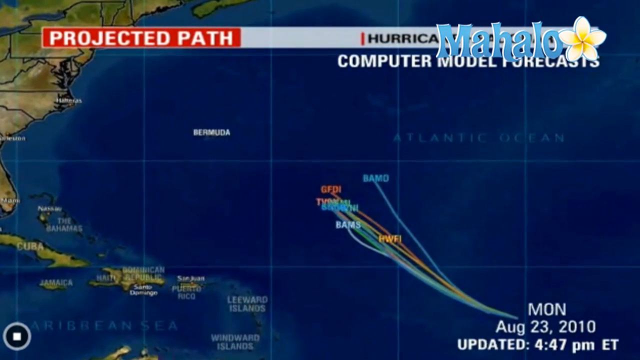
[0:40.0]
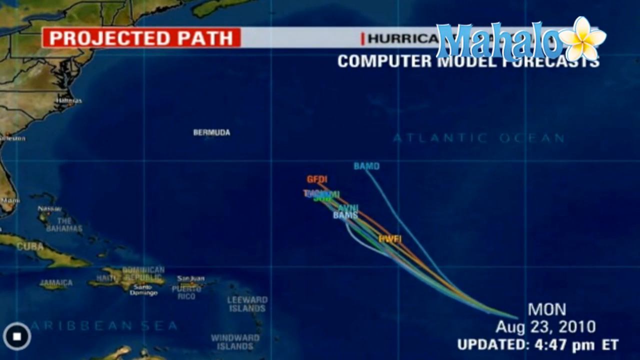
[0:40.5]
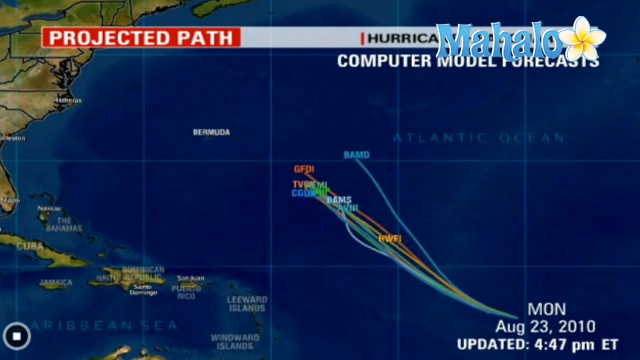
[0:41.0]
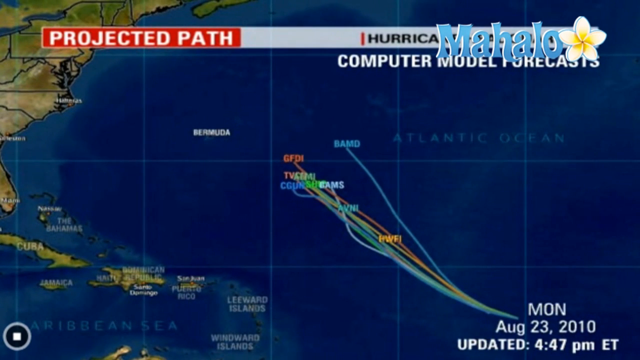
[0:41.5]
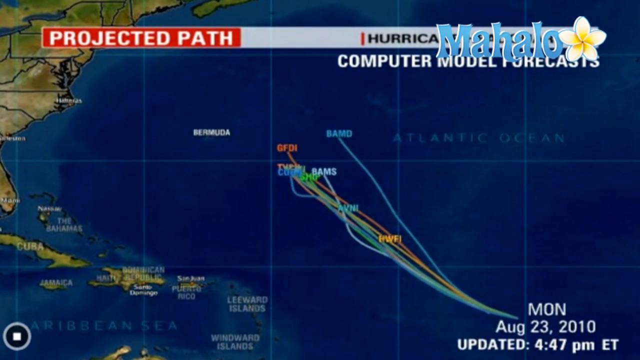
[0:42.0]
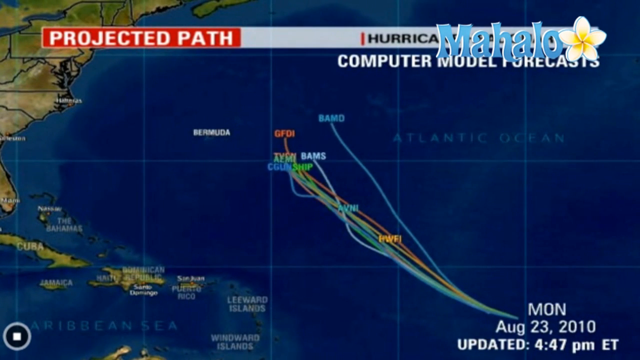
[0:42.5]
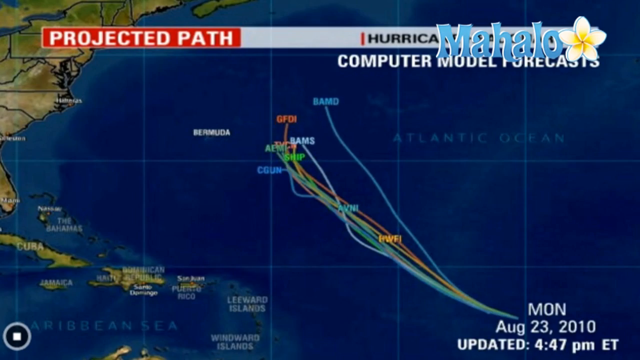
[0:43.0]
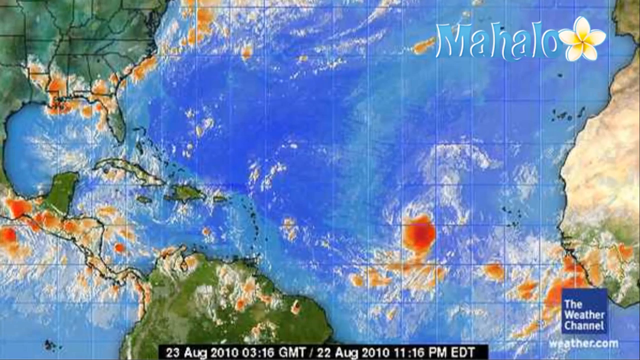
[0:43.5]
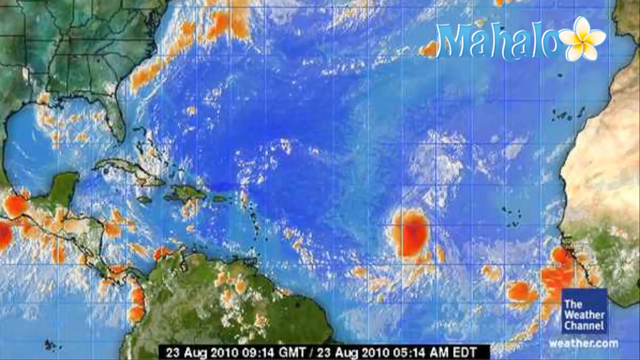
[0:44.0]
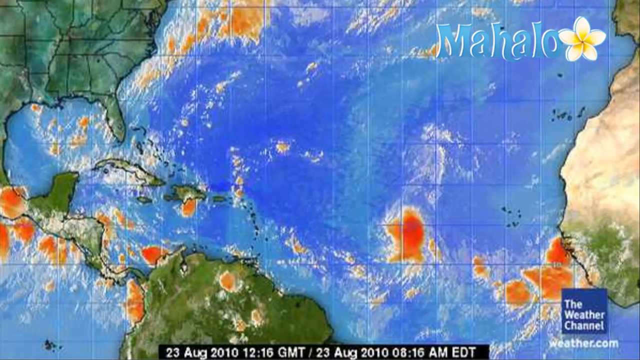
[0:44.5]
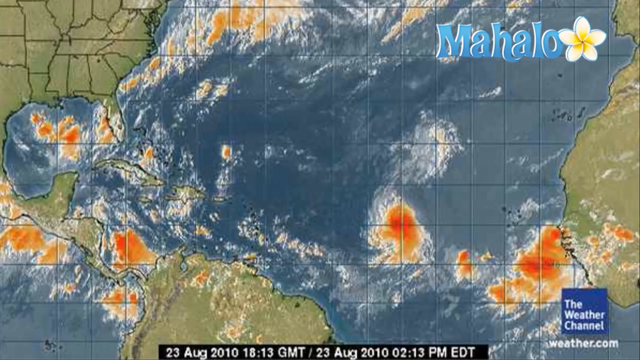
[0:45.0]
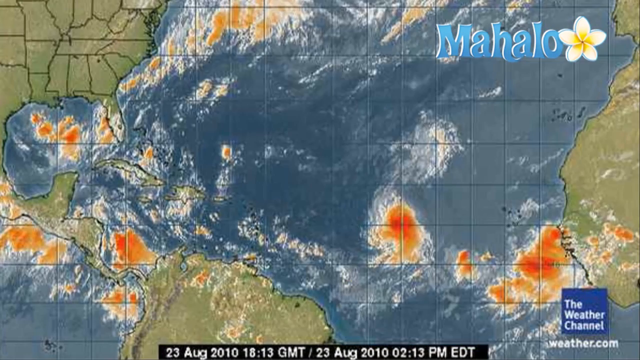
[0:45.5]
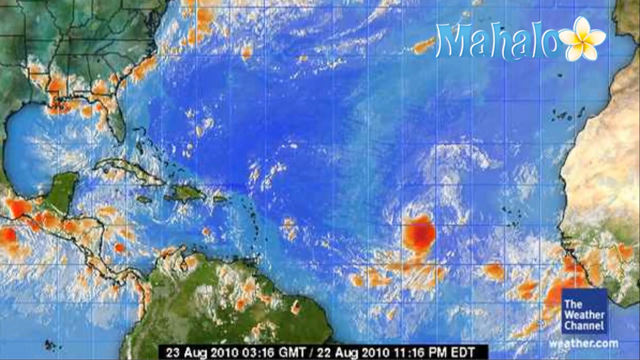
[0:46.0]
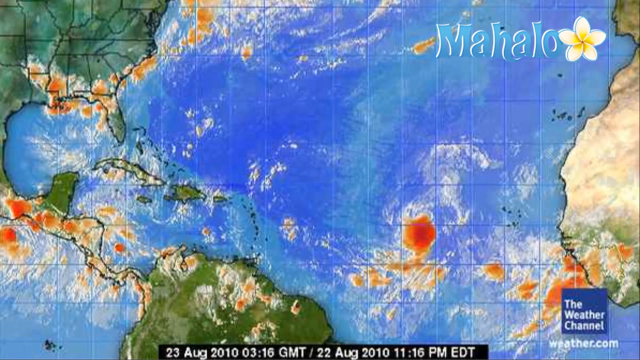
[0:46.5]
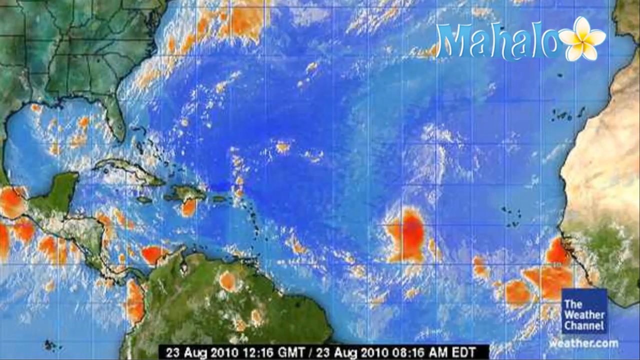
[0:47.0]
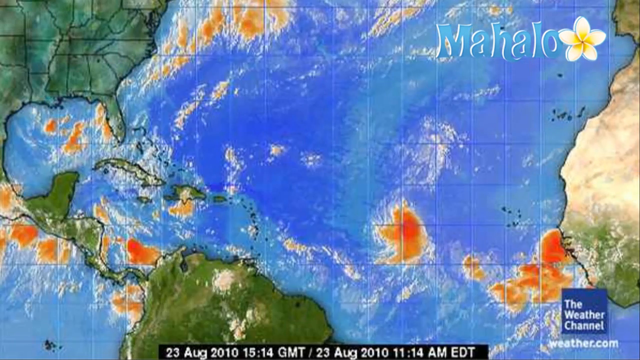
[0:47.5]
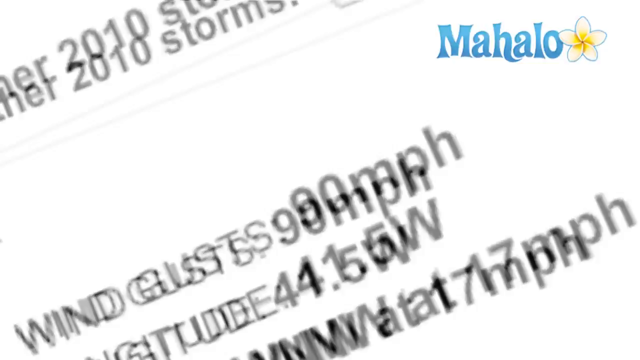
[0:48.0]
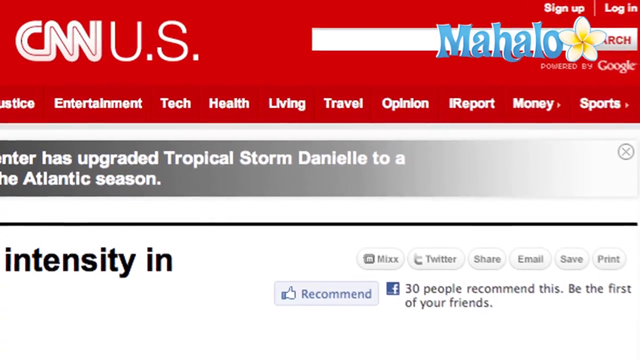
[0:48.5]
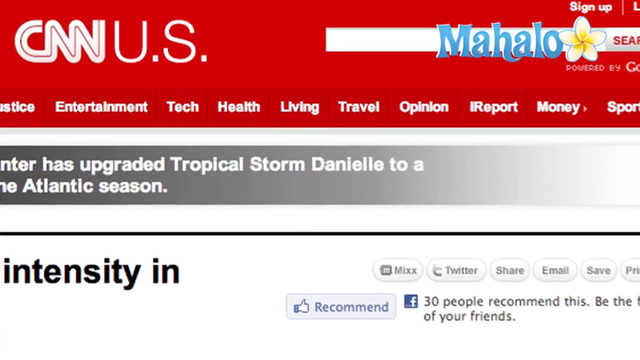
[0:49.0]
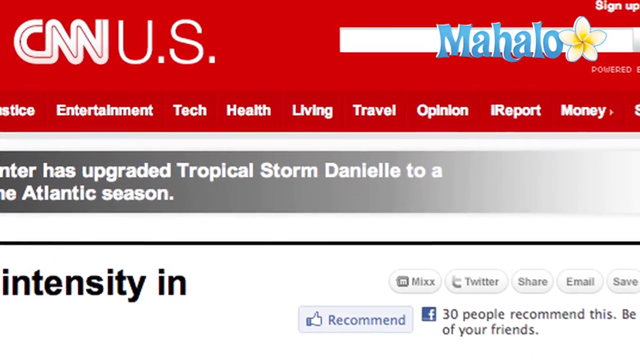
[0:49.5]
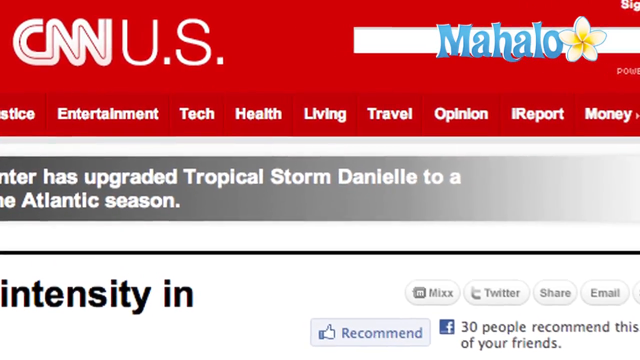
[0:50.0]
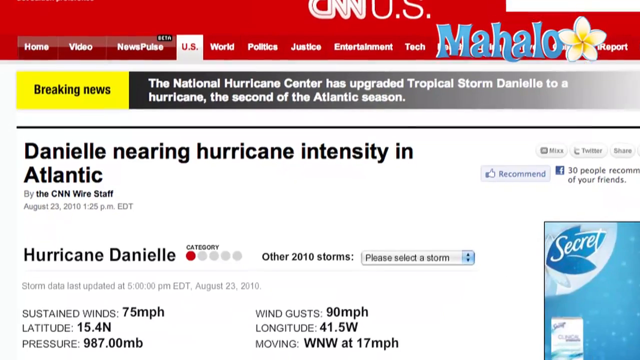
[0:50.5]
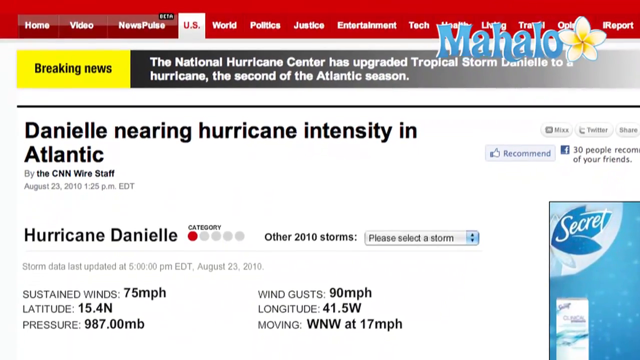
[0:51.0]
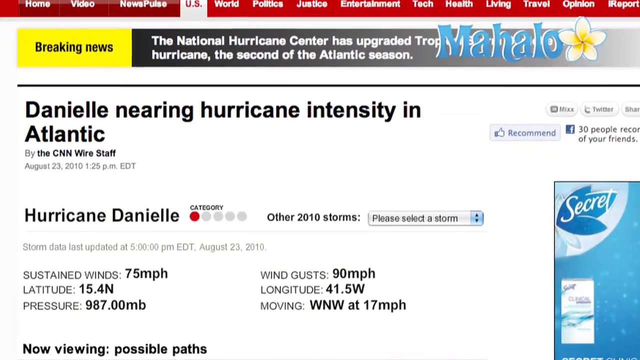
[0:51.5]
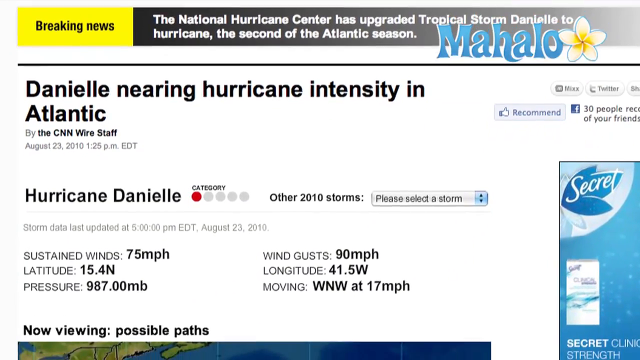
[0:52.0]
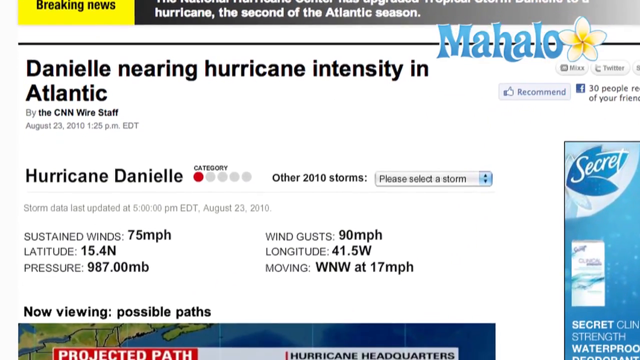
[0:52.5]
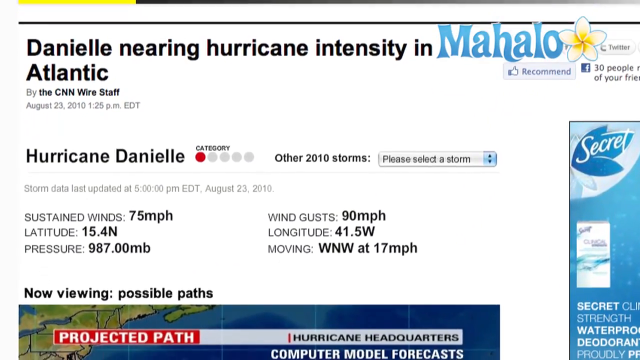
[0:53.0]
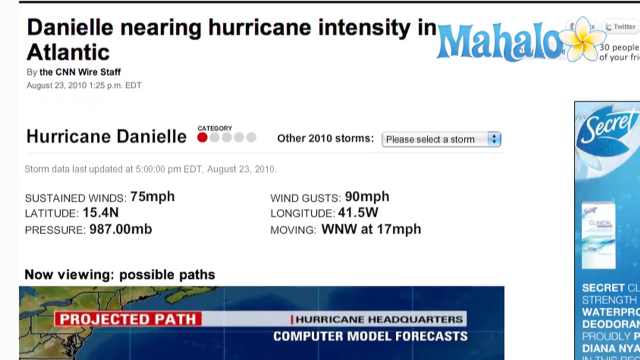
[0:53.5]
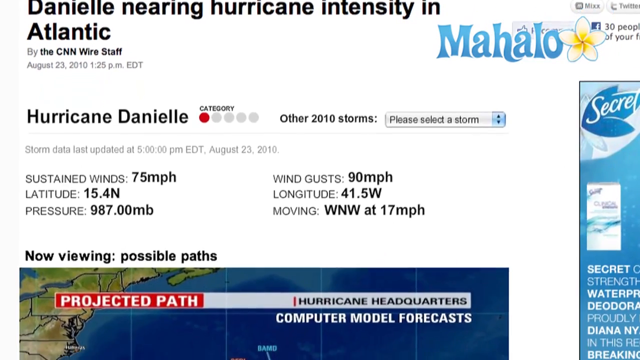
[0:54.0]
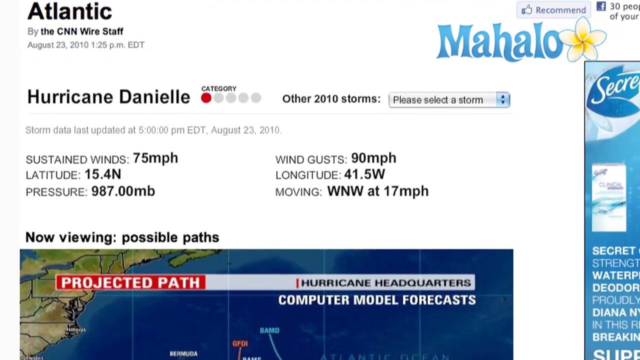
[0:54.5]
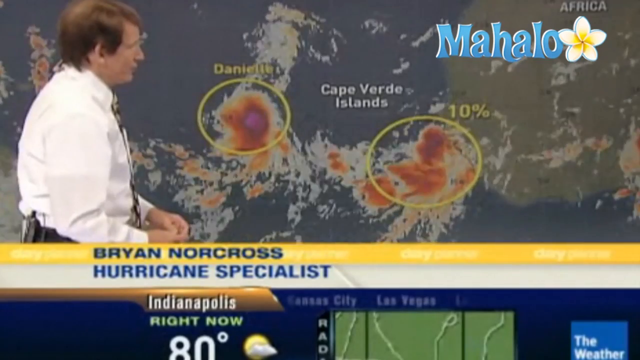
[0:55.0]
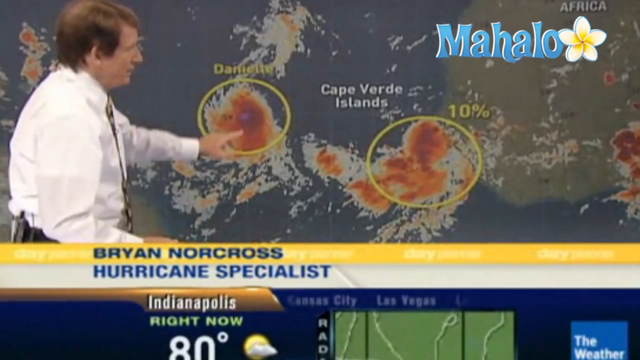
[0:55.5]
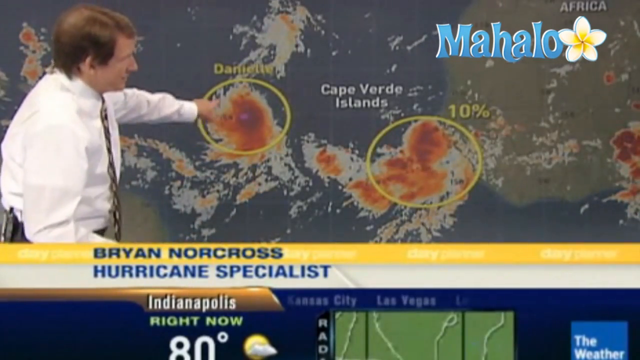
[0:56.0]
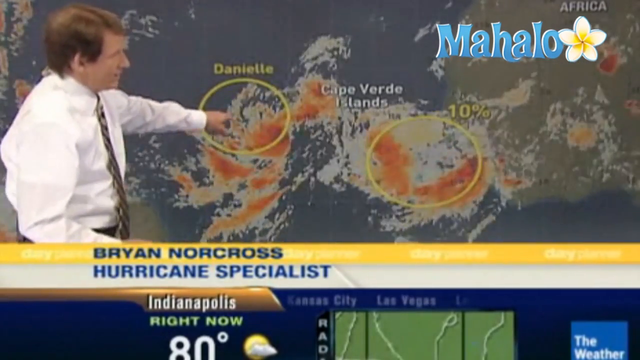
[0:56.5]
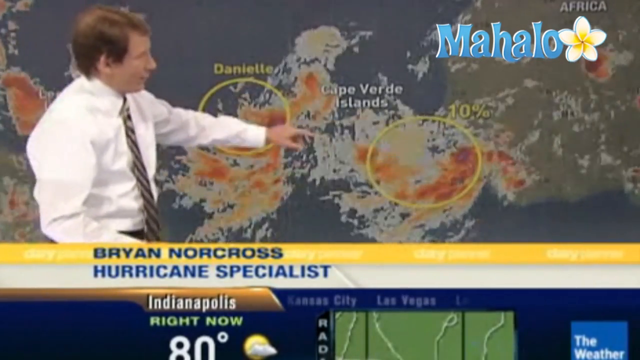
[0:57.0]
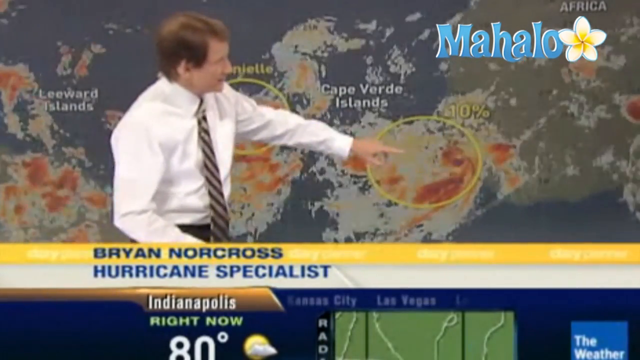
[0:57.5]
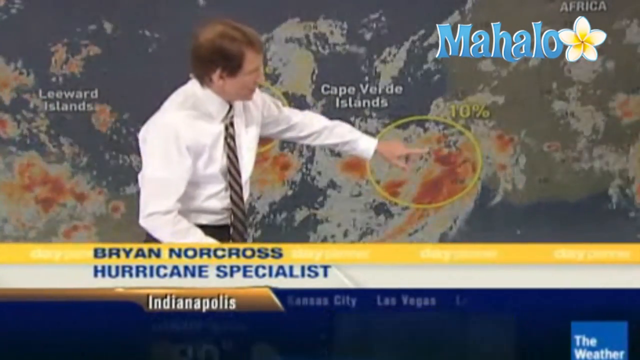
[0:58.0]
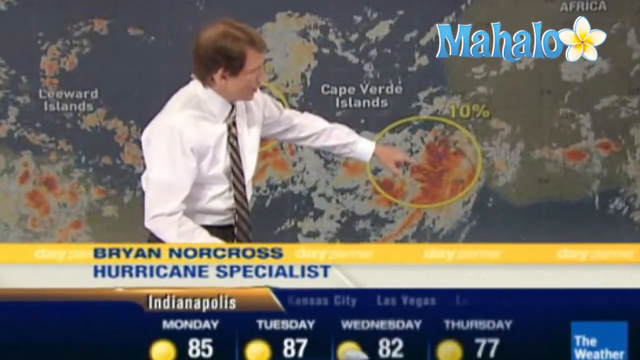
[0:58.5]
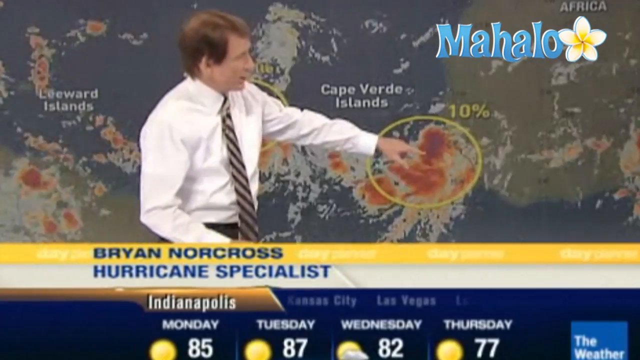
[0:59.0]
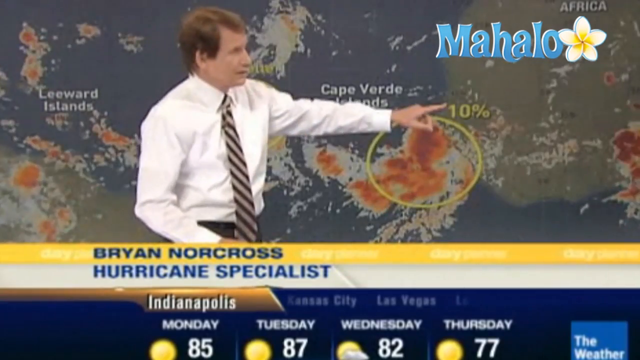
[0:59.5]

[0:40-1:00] Many cyclones are shown going from the center of the Atlantic Ocean toward Bermuda, moving up and down. A CNN.US page reads "Daniel is nearing hurricane intensity in the Atlantic." Hurricane Daniel is shown with sustained winds of 95 miles per hour, latitude 15.8, 987 megabars, winds up to 90 miles per hour and longitude 41 W, with no possible paths shown. A hurricane specialist talks about the hurricane and points out a 10 percent chance for the cyclone. The video is brought by Mahalo.